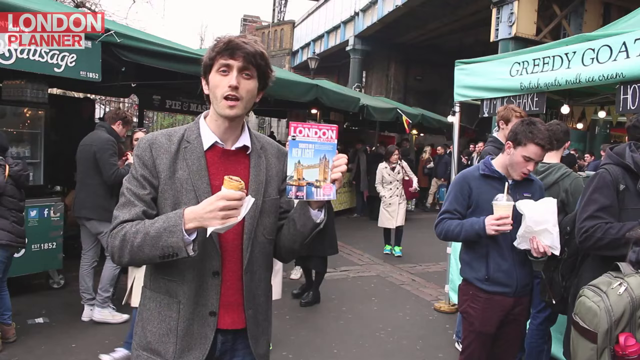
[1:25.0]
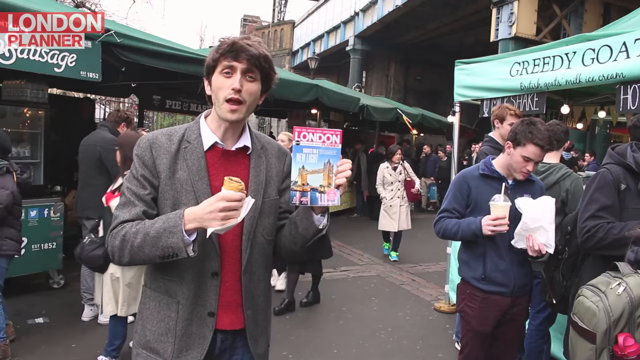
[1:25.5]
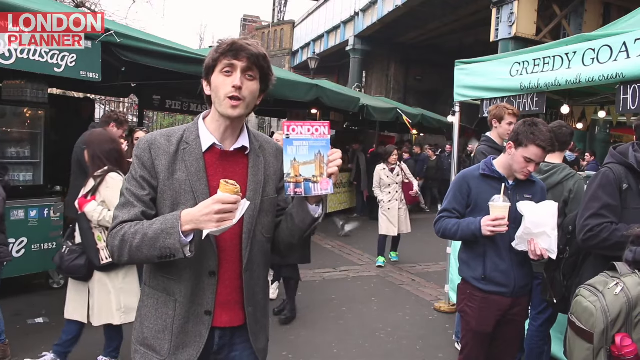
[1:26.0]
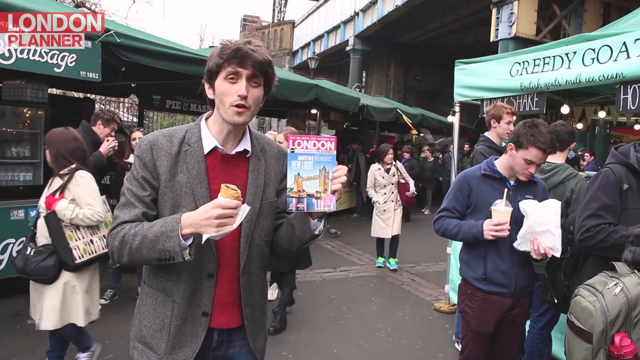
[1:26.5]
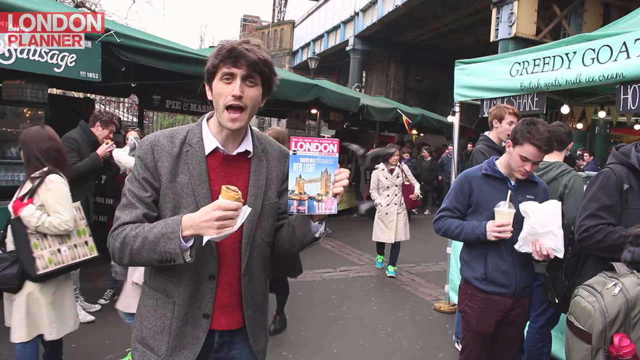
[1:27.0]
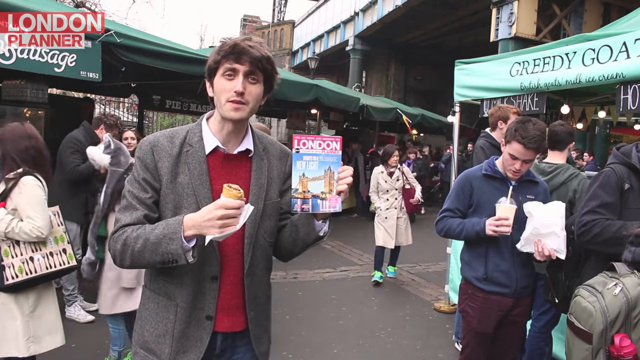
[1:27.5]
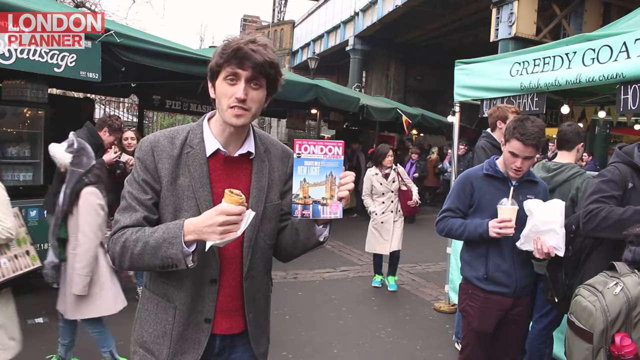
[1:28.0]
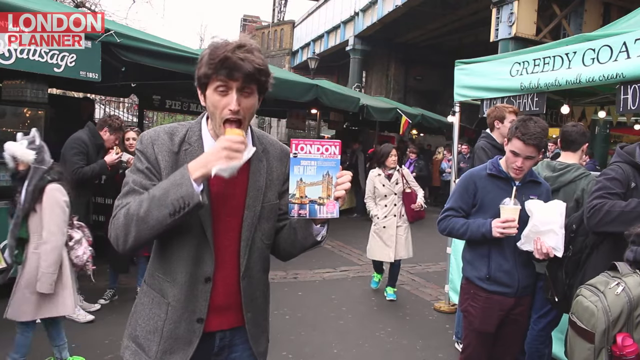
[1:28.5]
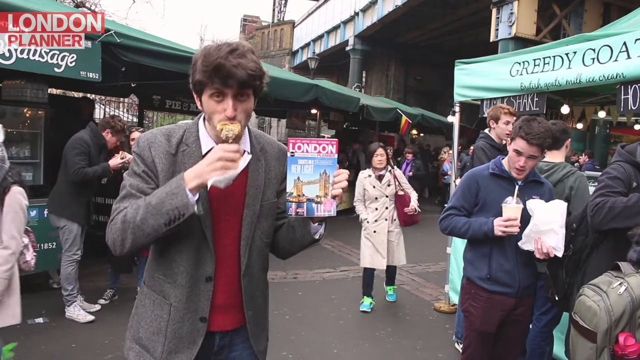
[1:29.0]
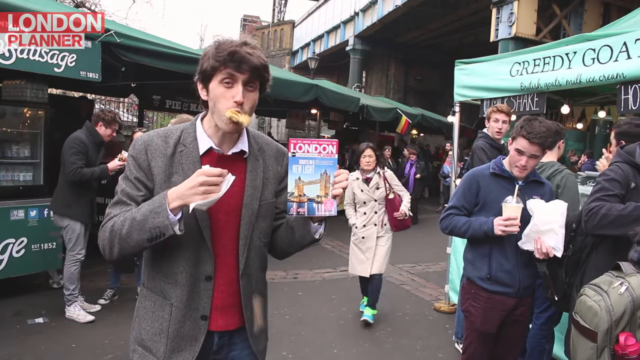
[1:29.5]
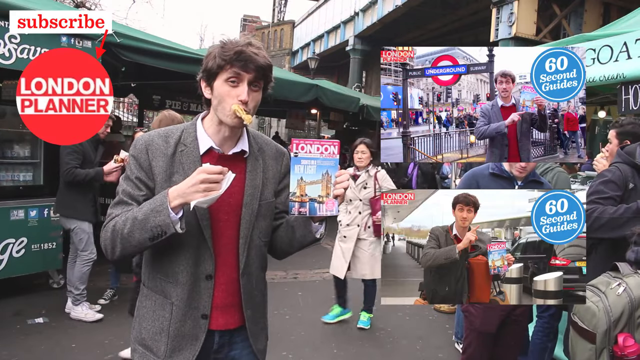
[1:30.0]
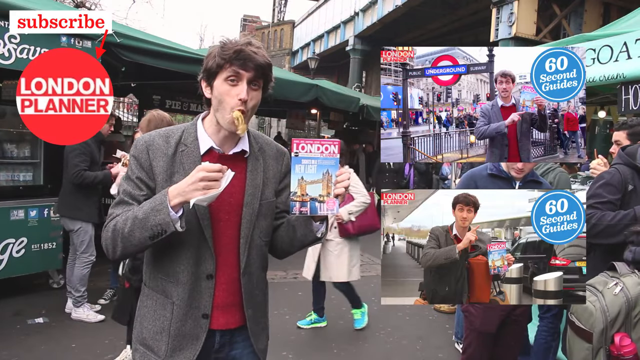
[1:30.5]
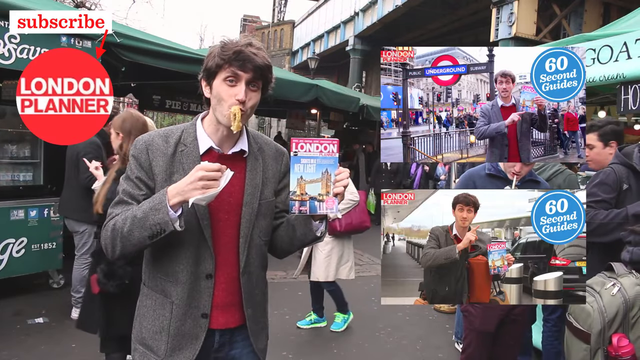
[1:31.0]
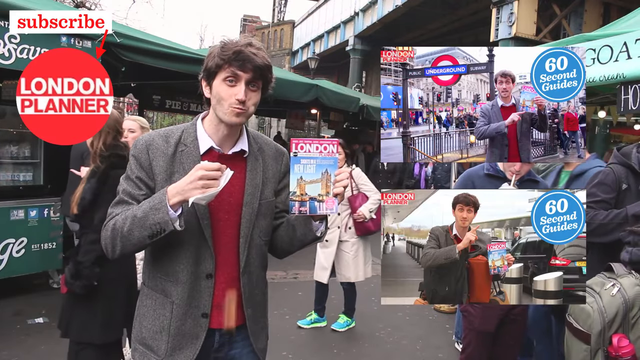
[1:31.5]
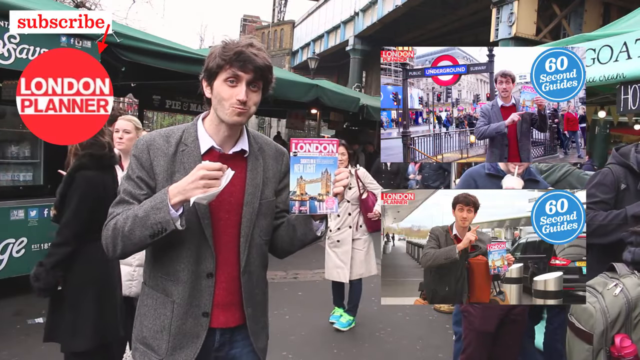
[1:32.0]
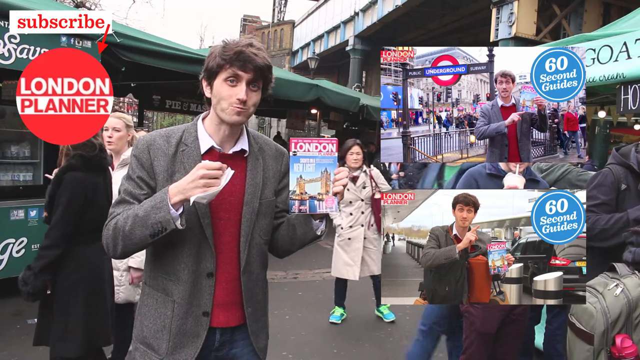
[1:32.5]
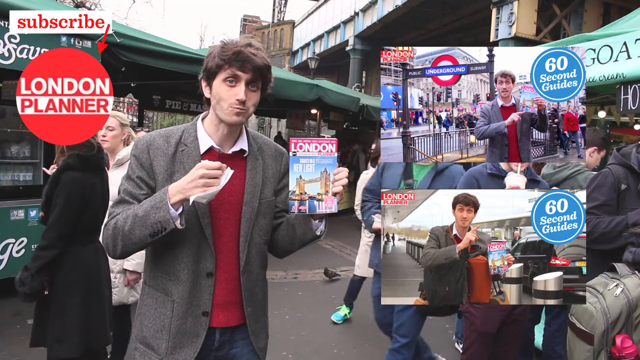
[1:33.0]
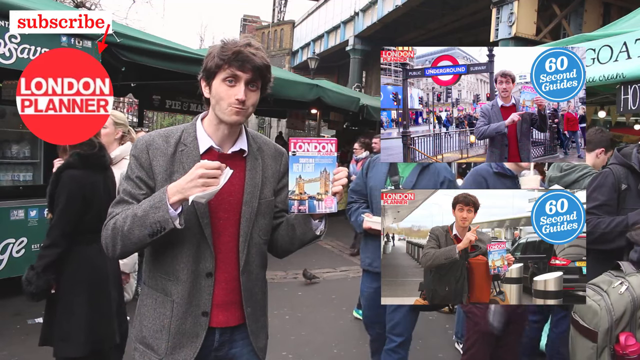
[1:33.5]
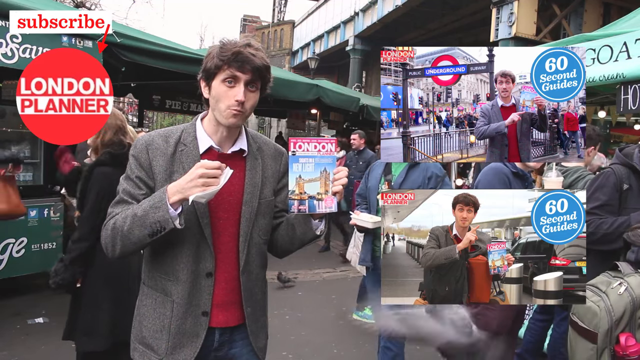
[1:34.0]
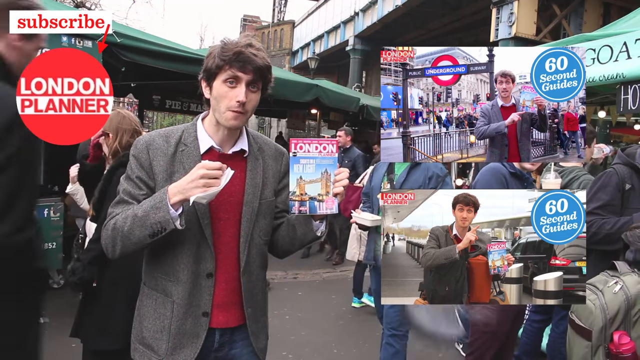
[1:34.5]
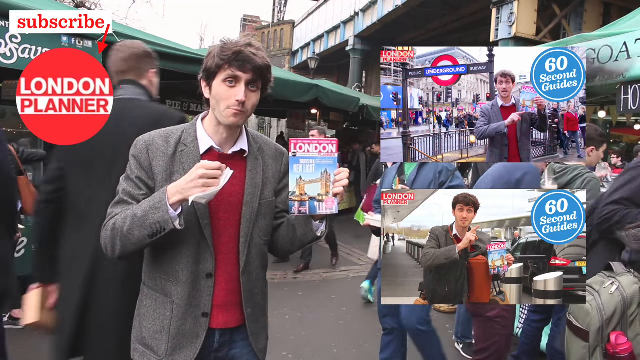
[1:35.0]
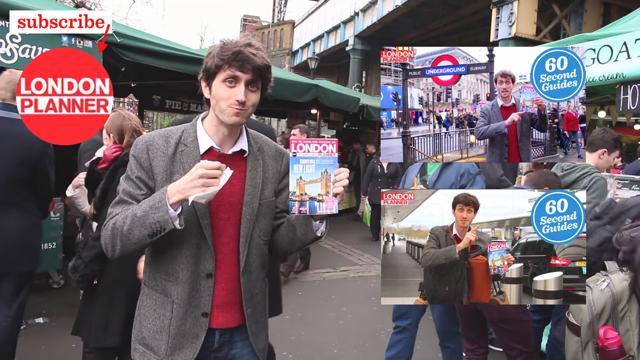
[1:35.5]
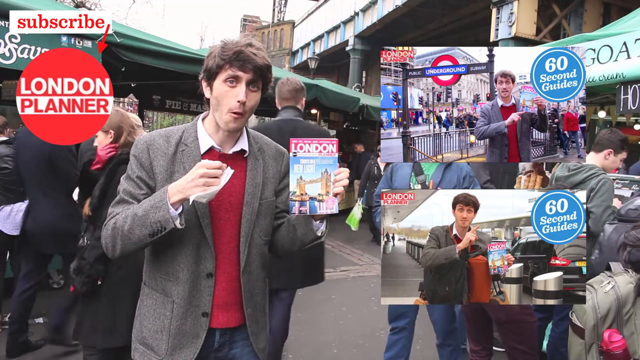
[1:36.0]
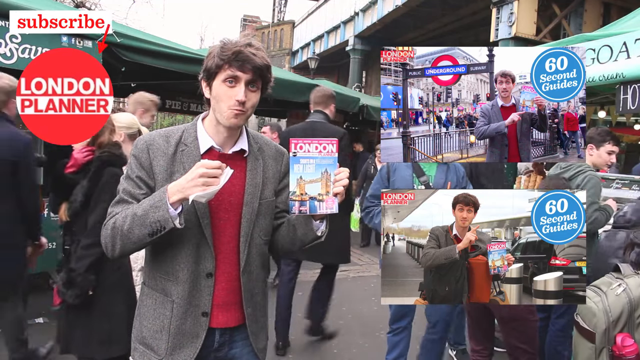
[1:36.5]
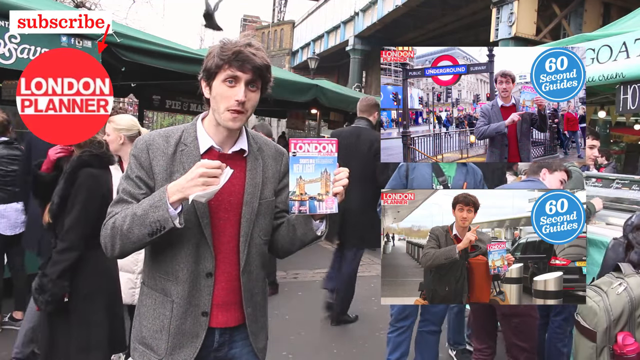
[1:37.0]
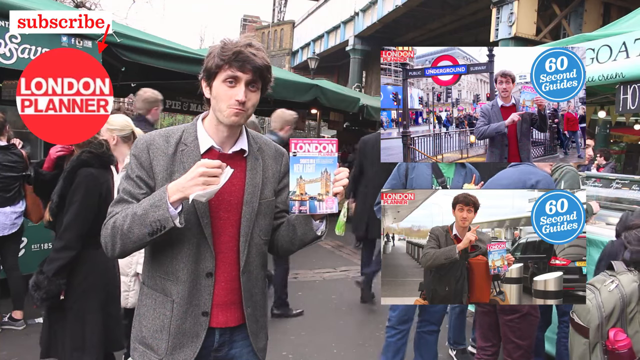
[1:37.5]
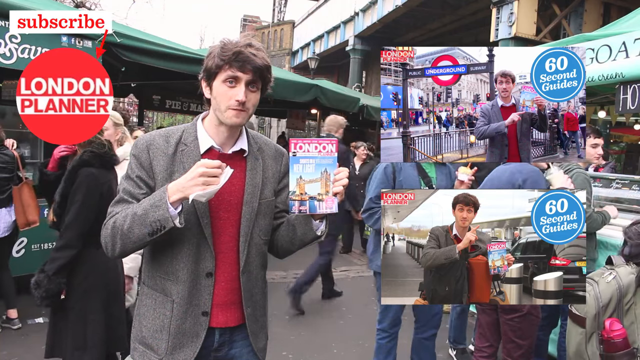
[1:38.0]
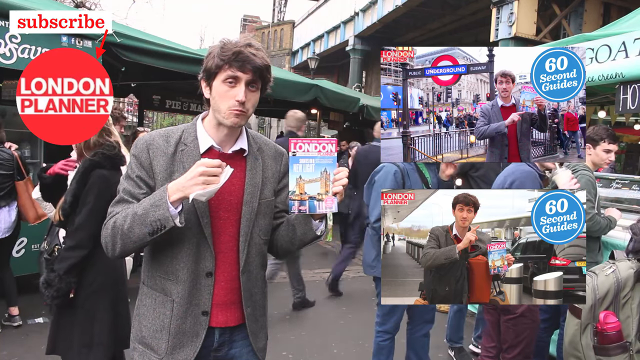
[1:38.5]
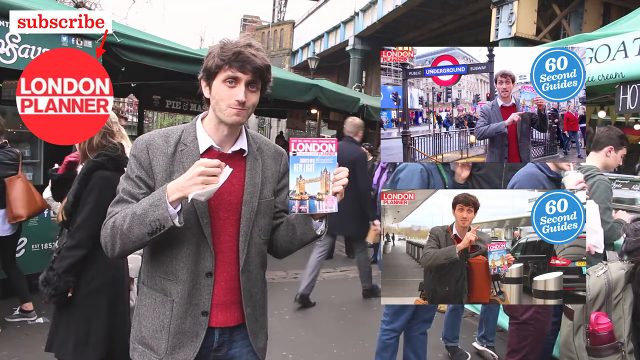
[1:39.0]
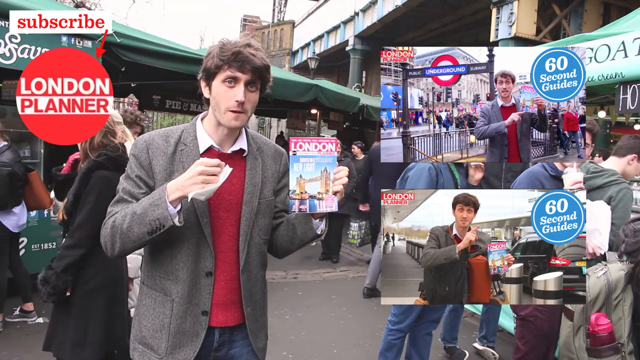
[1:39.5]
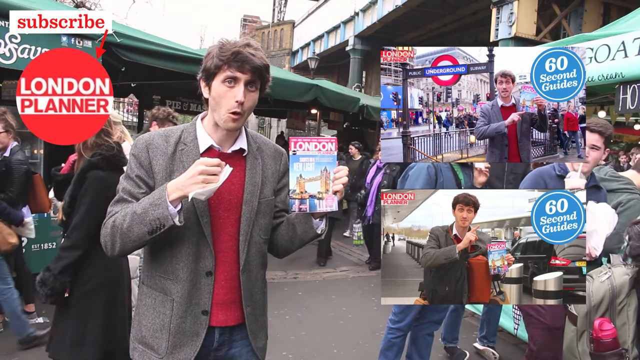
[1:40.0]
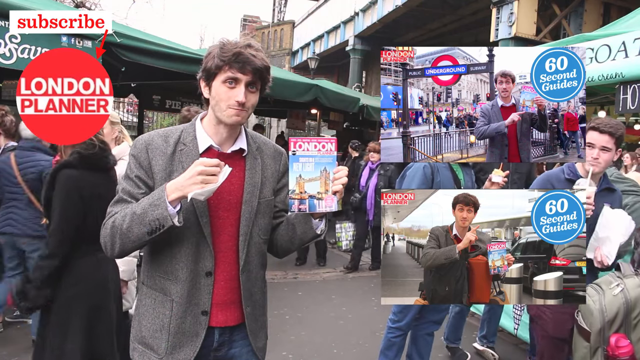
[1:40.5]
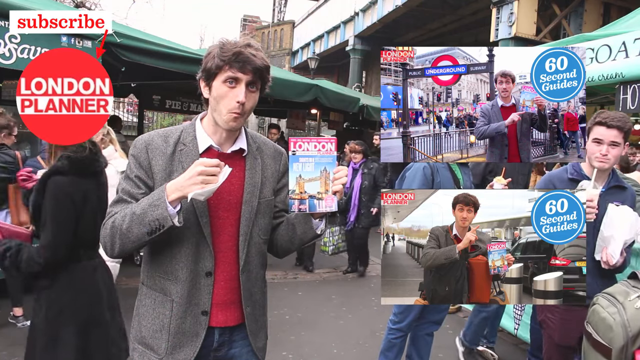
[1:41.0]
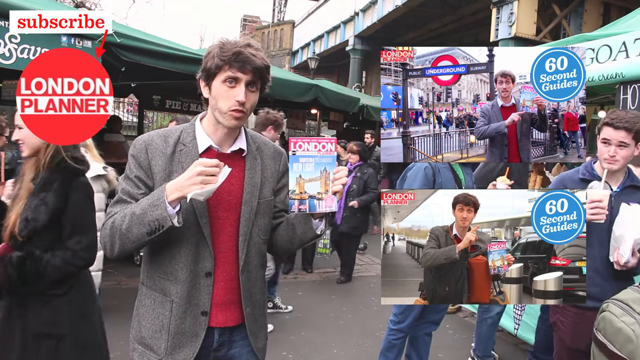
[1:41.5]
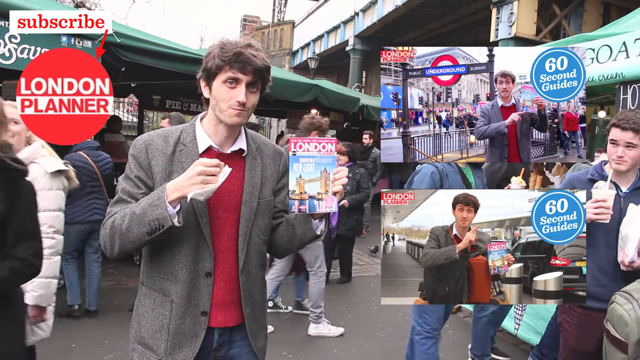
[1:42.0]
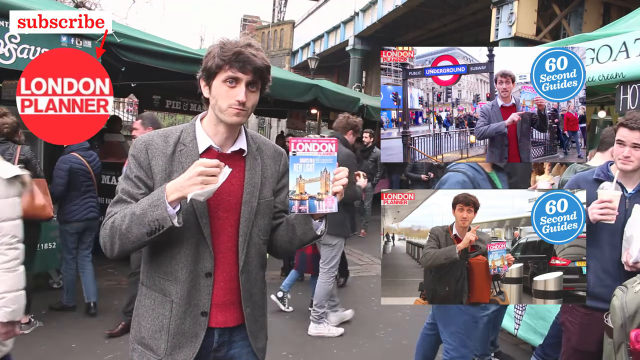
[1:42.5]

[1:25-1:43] The man is back in an area with a lot of vendors. He looks at the camera holding some sort of snack, a hot dog, in his right hand, along with a London book, perhaps a guide for travelers. He looks at the camera and eats his hot dog. To the right is the text "London planner", and a small red box saying "subscribe" points to it. Cuts follow showing some of his other episodes, such as how to use the London Underground and how to get around London. Behind them, people visit the vendors, some selling clothing and some eateries. A man who is eating and sipping something and holding a bag looks inquisitively at the host.